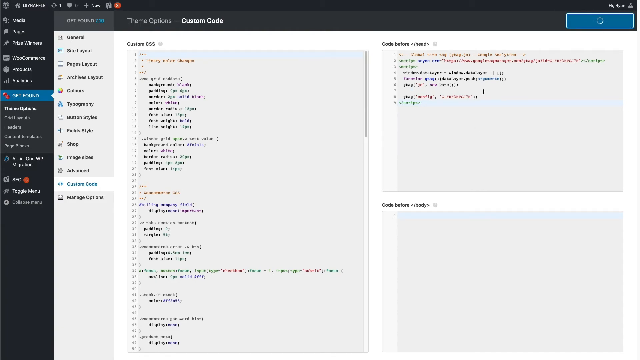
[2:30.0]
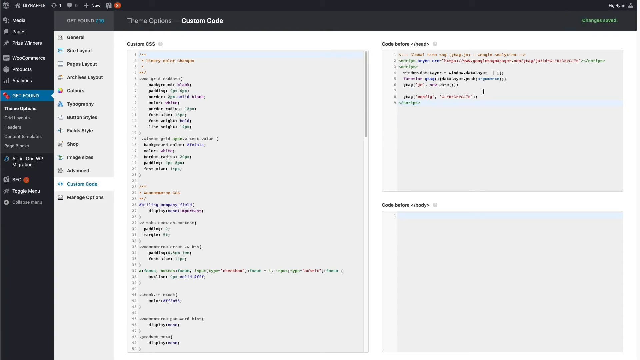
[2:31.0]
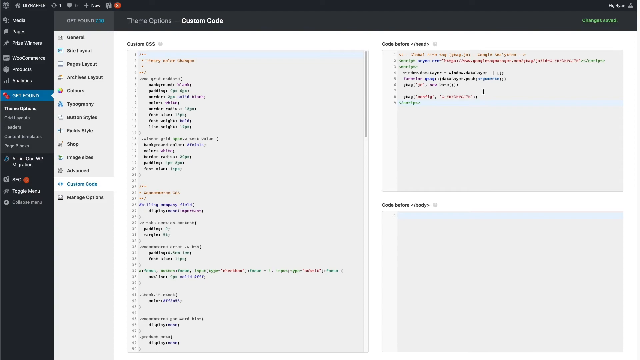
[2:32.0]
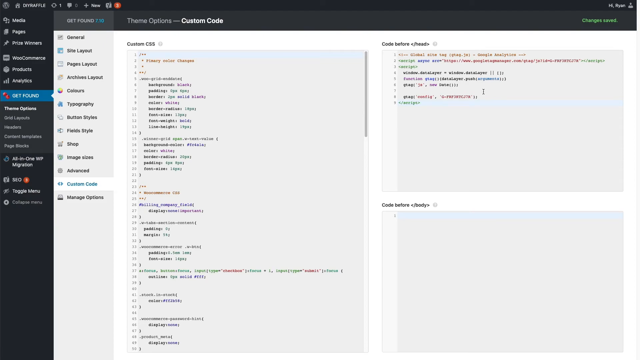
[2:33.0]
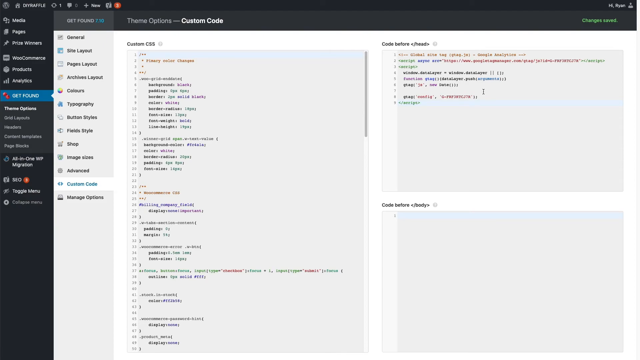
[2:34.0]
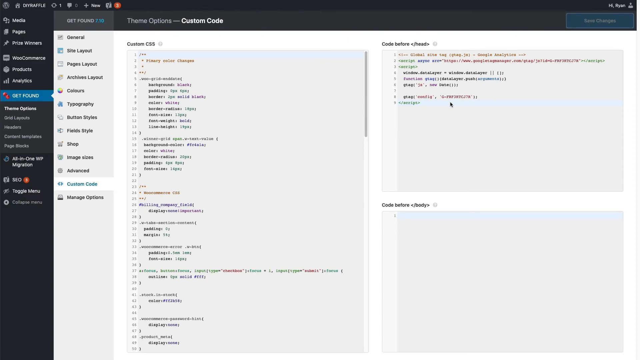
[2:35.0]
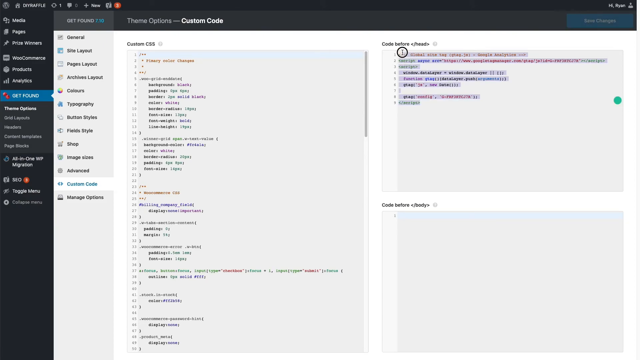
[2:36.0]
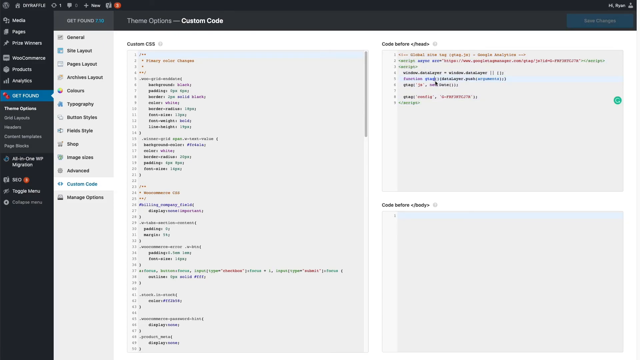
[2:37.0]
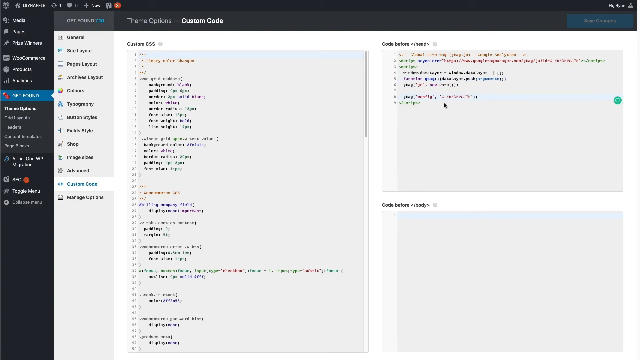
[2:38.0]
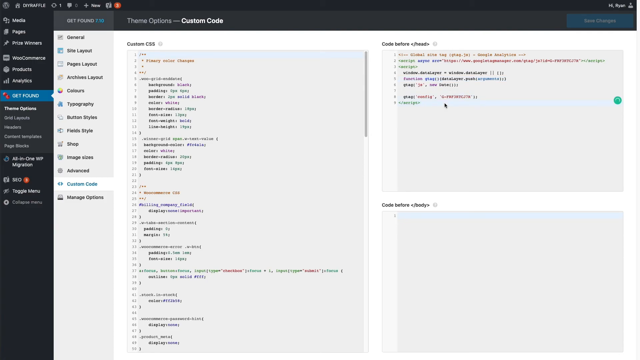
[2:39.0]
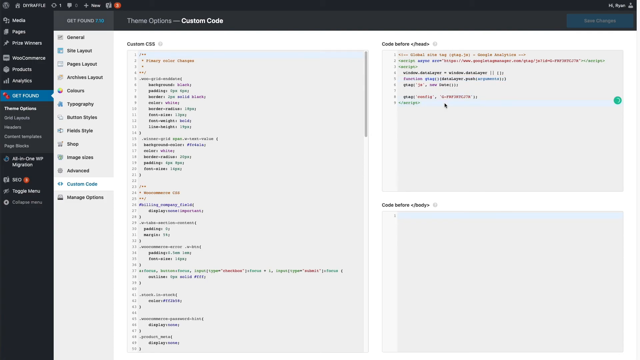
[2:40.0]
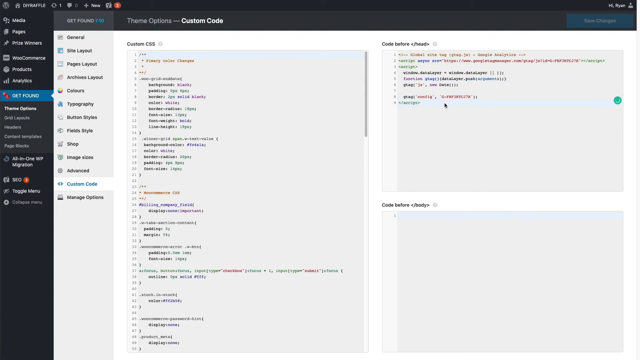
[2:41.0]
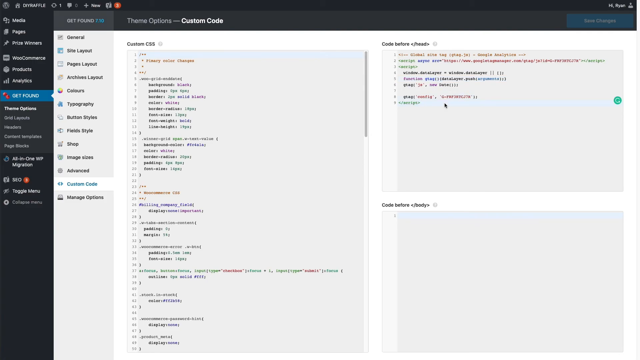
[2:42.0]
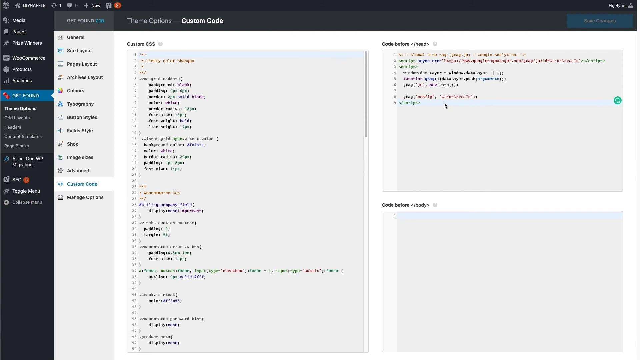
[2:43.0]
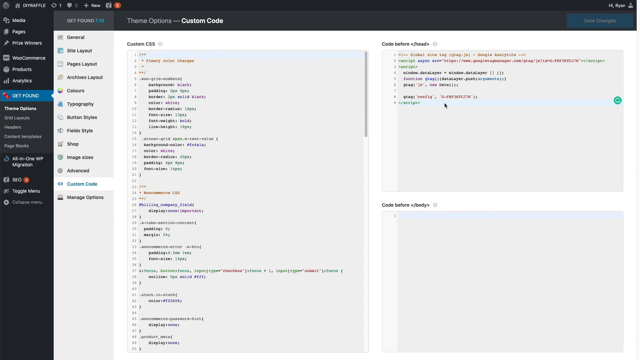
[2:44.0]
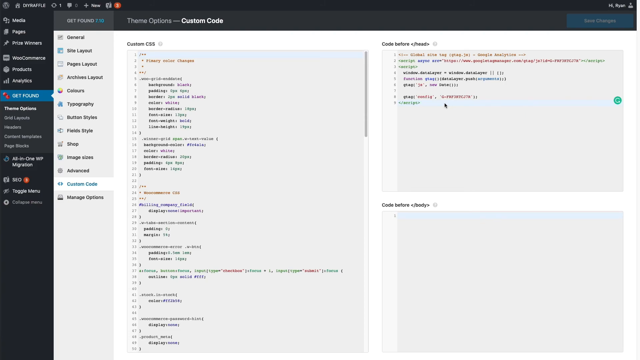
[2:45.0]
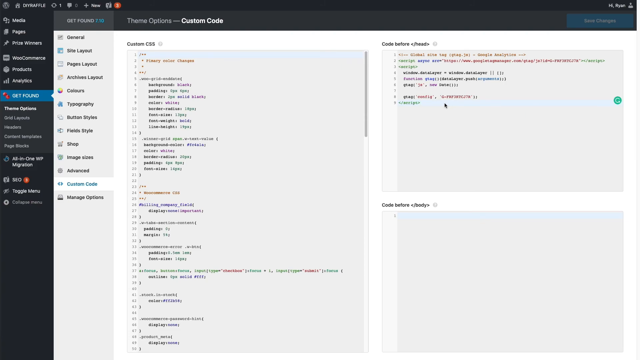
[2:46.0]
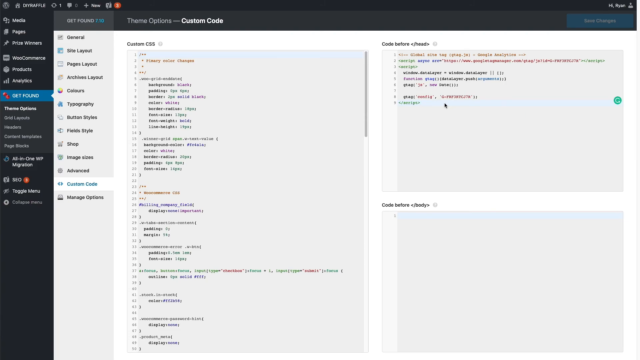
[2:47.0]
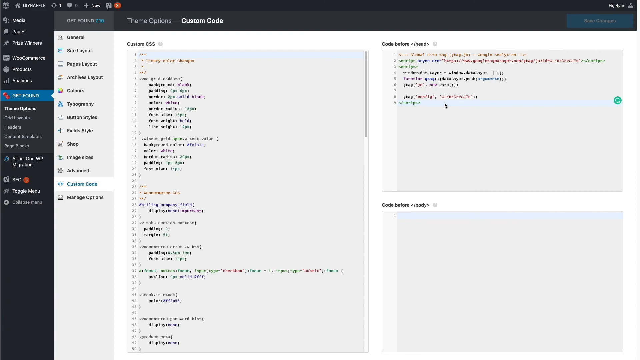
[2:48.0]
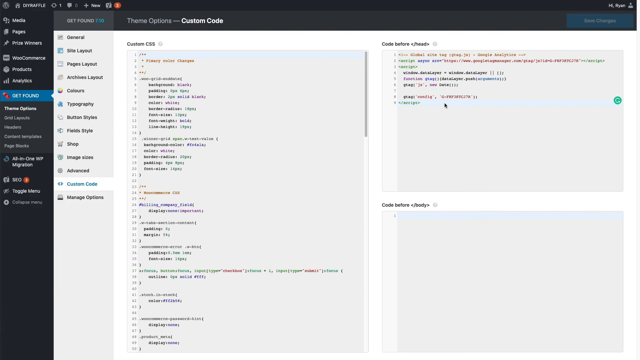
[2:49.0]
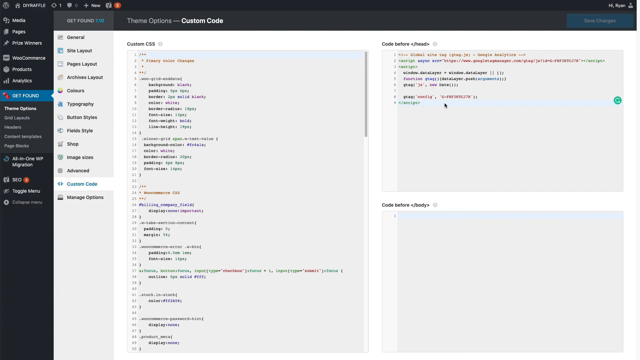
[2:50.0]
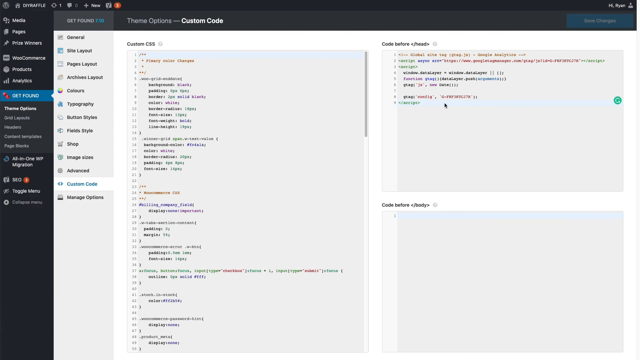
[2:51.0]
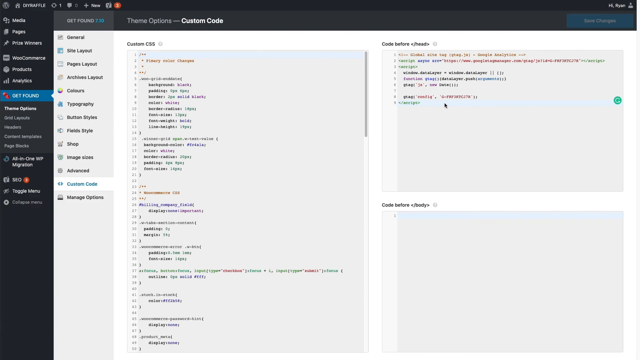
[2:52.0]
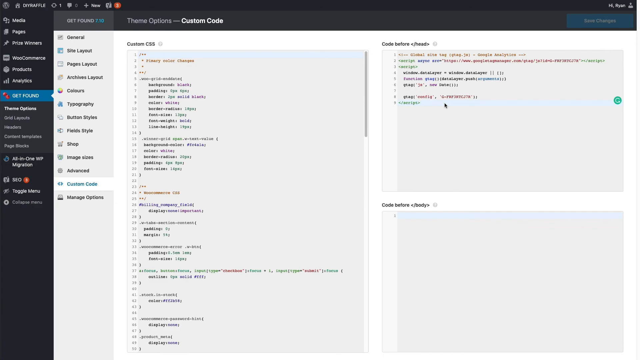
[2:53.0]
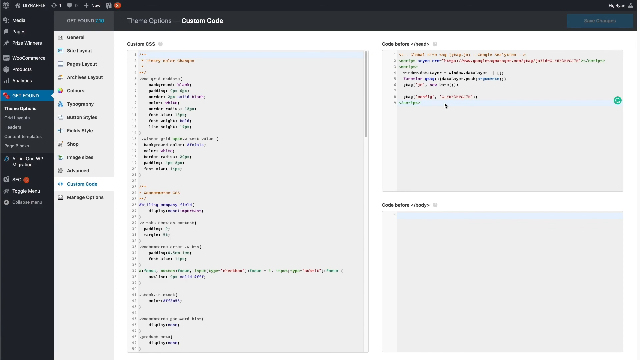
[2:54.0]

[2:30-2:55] Under the theme options, the person has copied information into the custom code box and saved the changes, and highlights the last line of text. They are entering custom code, apparently to adjust the look of the website shown earlier. The general menu includes site layout, page layout, colors, topography, button style and shop menu.